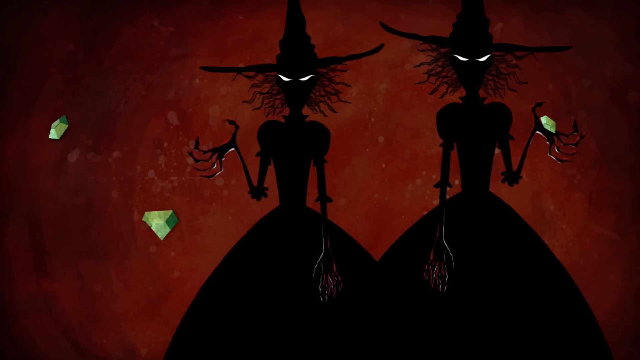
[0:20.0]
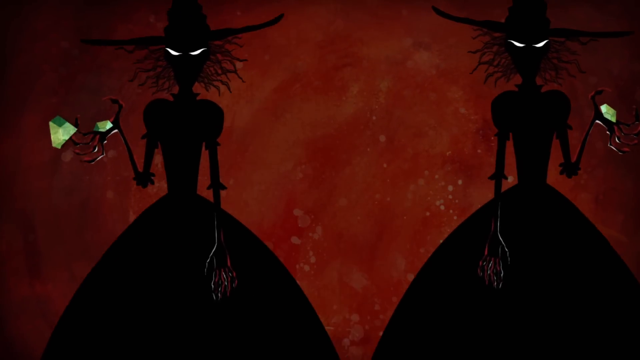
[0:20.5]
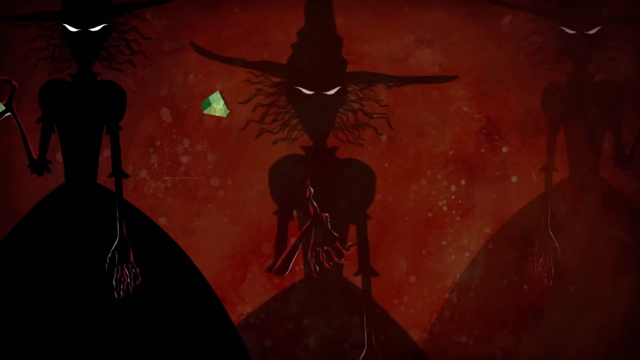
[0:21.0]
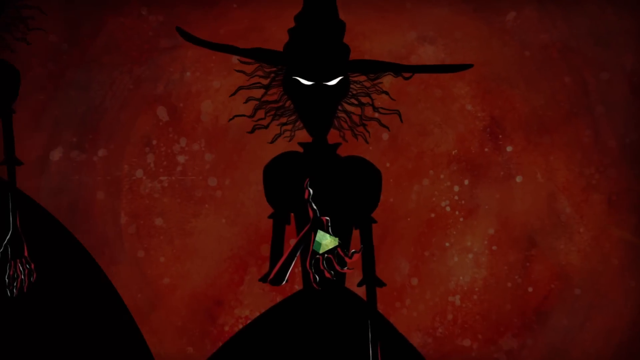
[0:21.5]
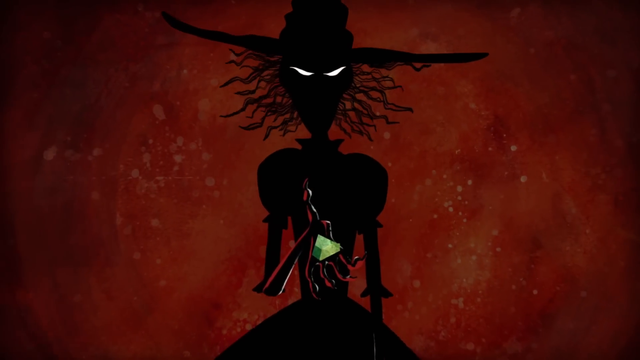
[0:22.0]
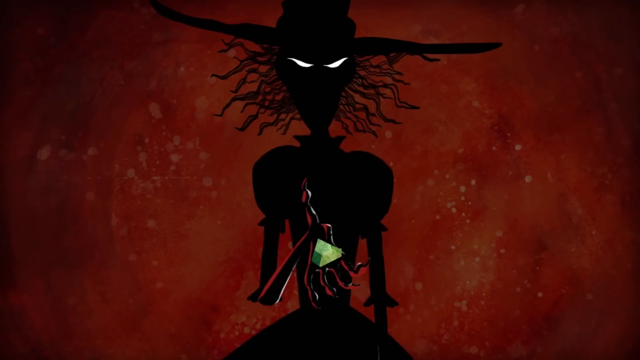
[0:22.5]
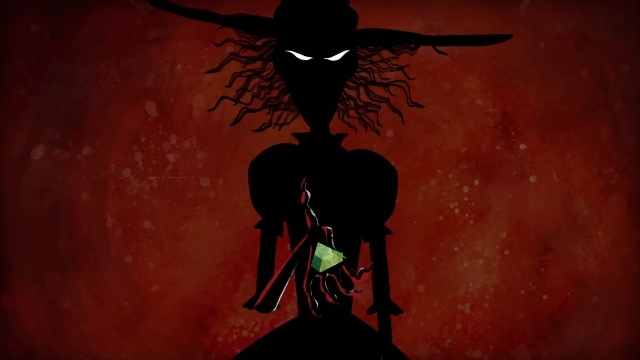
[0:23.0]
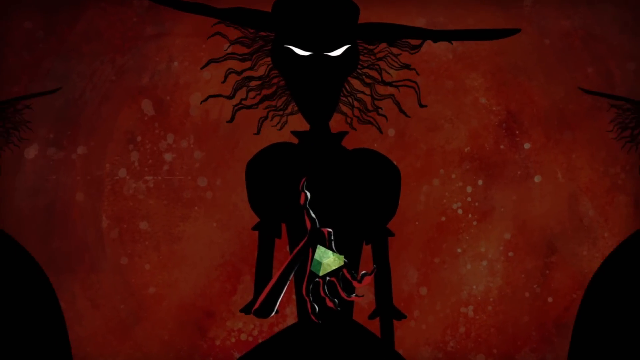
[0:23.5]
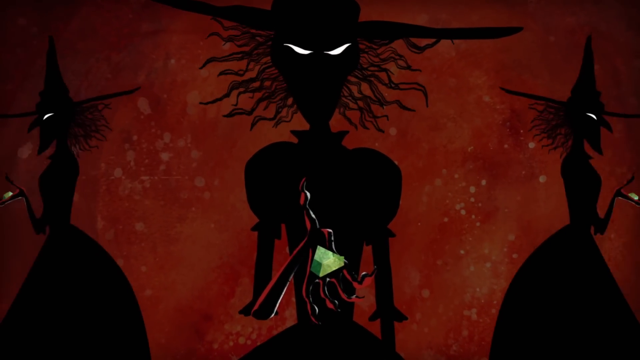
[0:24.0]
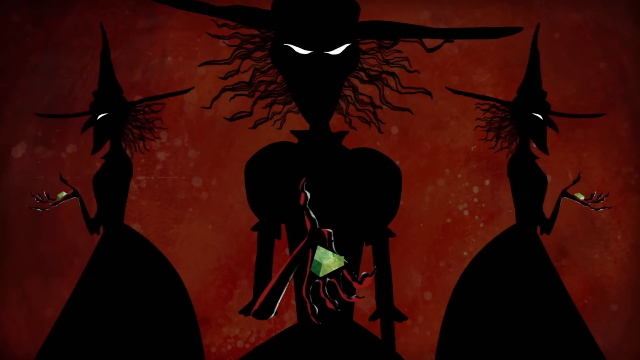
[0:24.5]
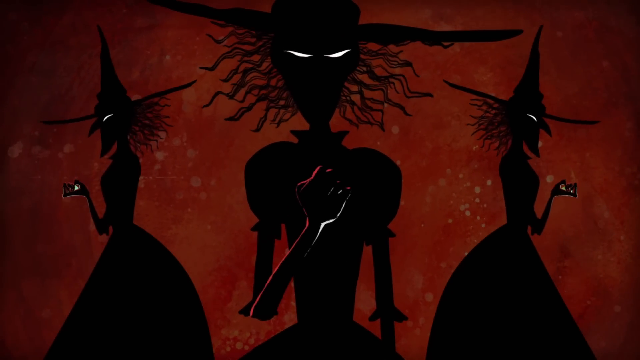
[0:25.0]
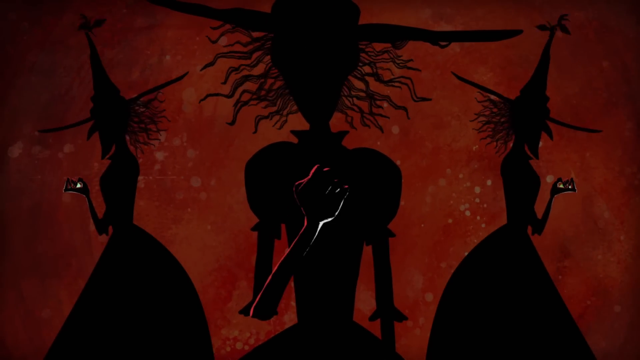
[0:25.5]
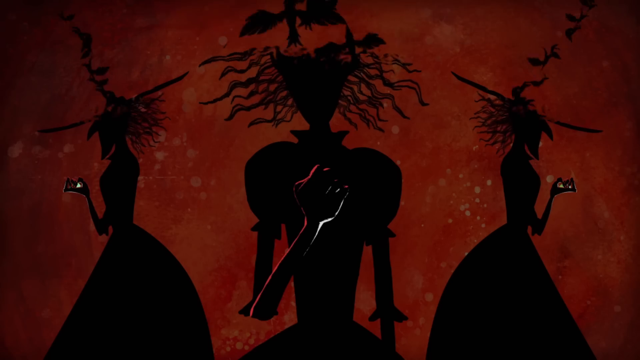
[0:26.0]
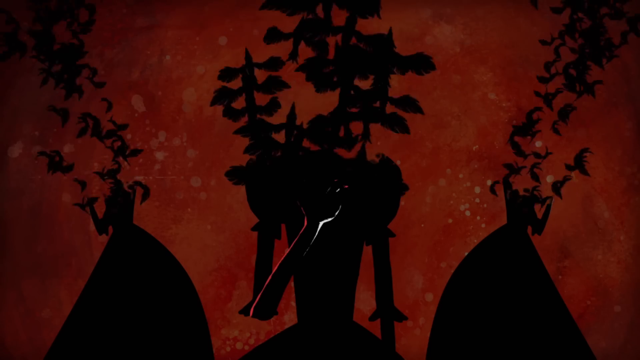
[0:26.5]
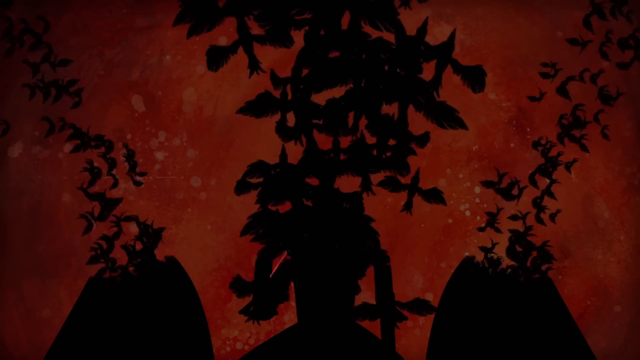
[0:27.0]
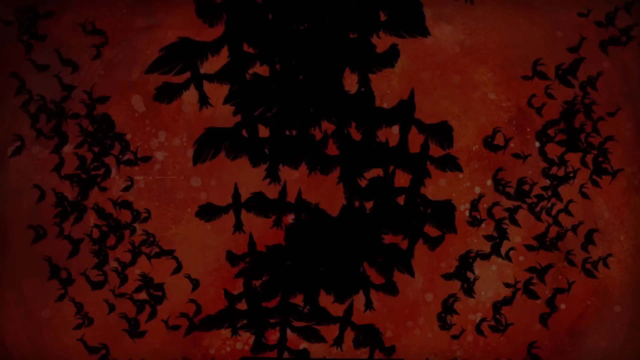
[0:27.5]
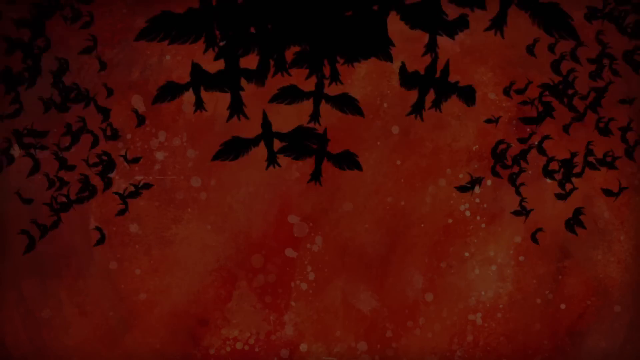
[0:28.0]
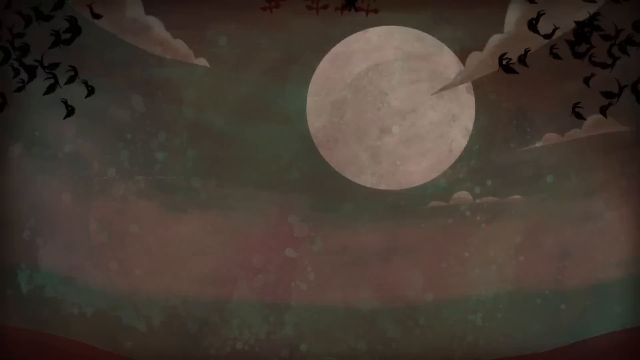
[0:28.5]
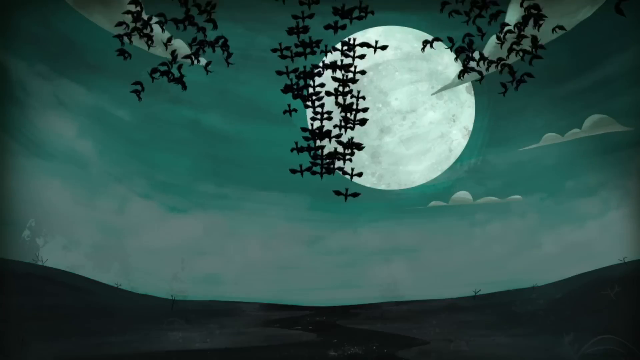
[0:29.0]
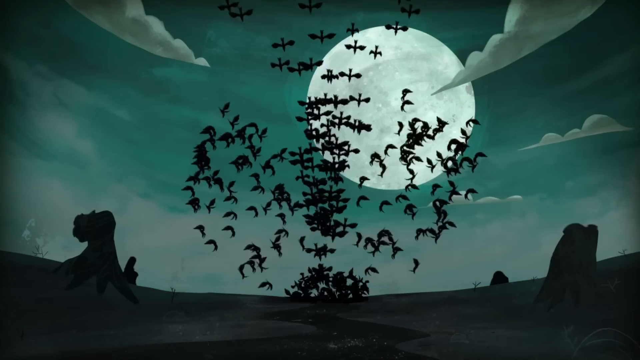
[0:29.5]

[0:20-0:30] A witch with roots growing in her hair has captured the diamond. She then fades away.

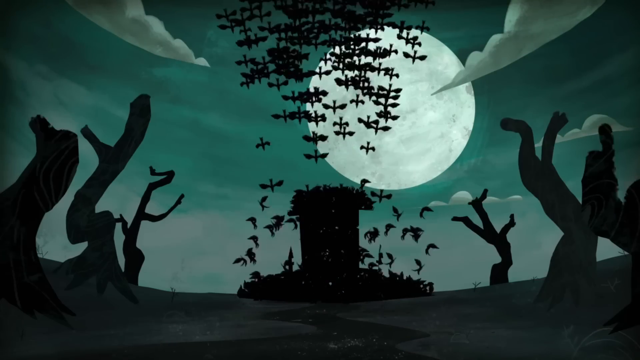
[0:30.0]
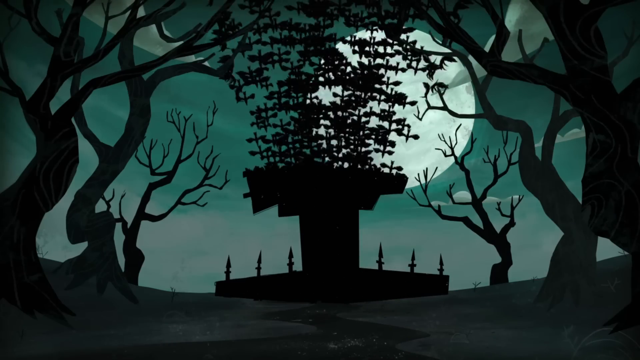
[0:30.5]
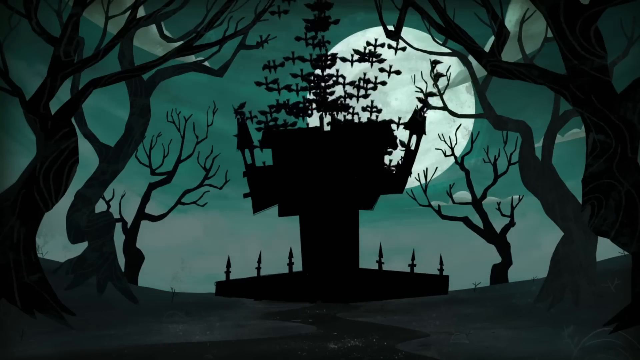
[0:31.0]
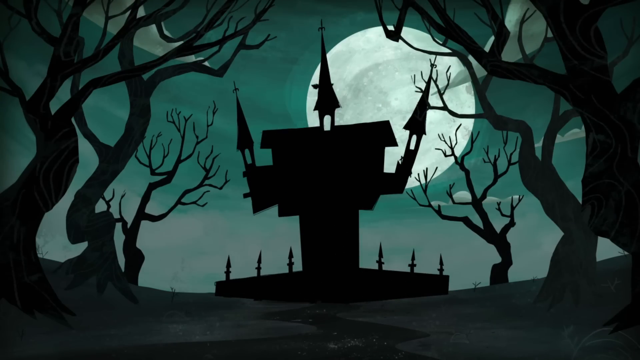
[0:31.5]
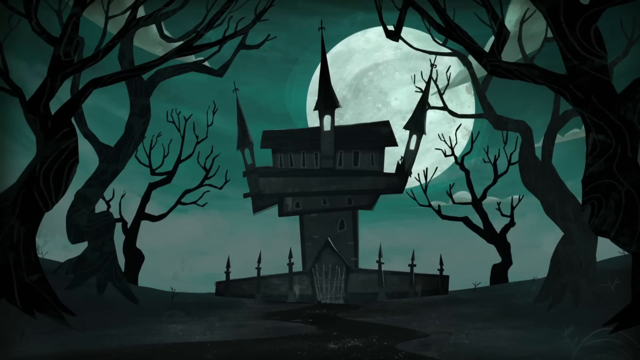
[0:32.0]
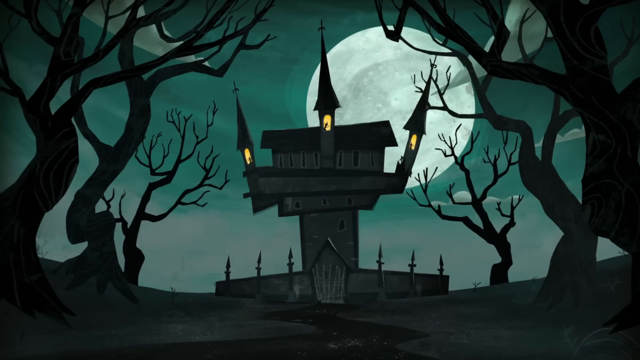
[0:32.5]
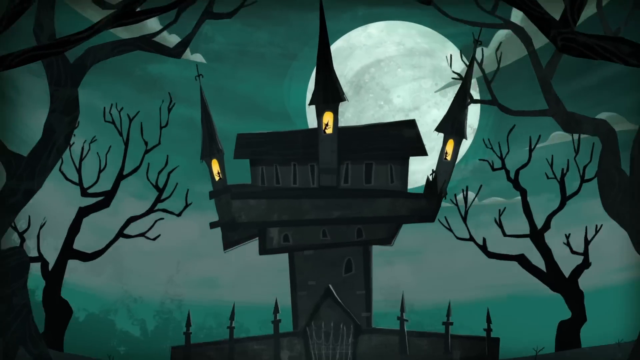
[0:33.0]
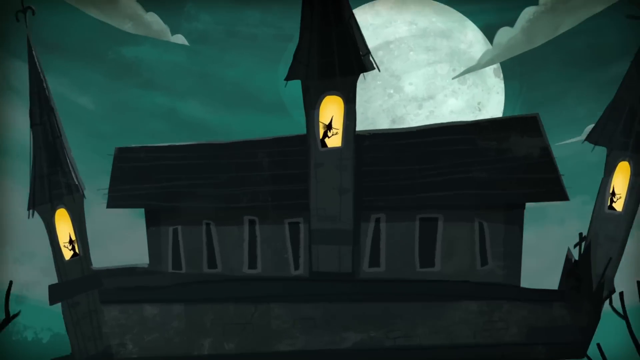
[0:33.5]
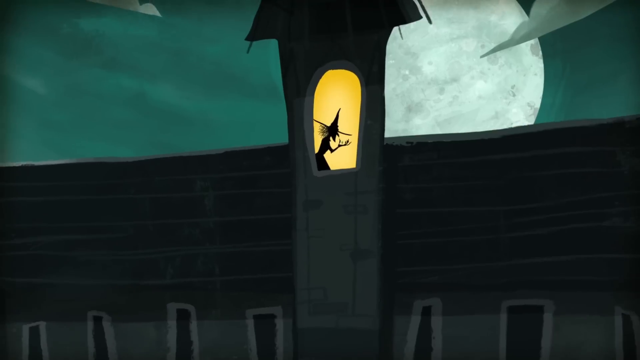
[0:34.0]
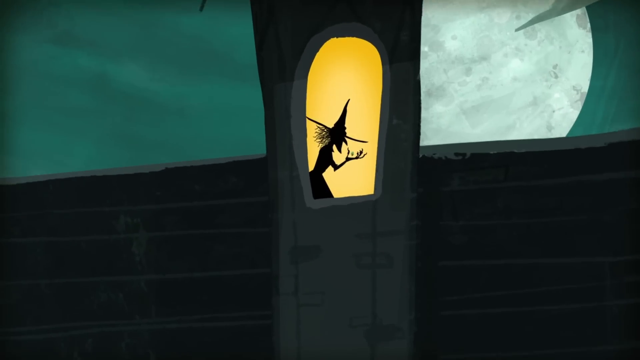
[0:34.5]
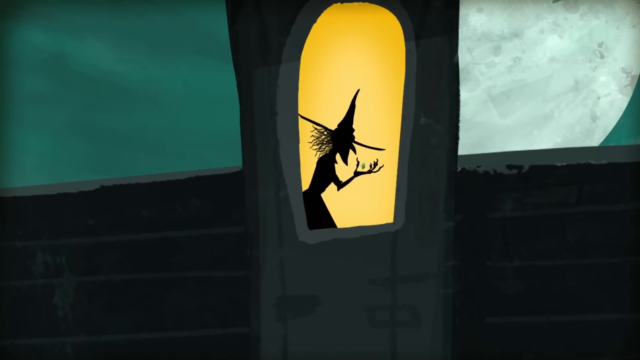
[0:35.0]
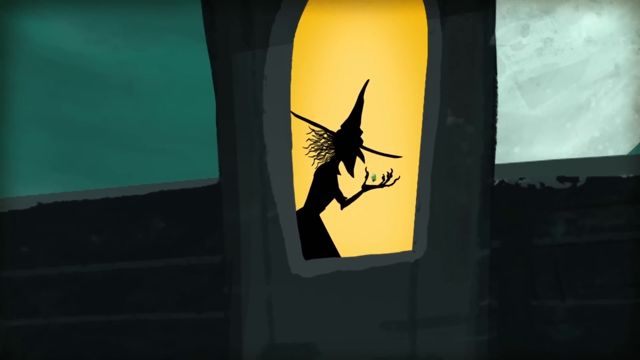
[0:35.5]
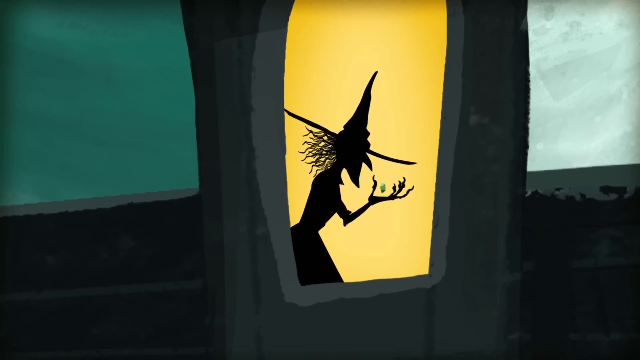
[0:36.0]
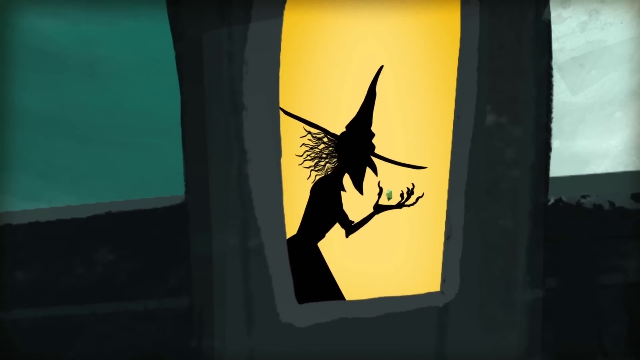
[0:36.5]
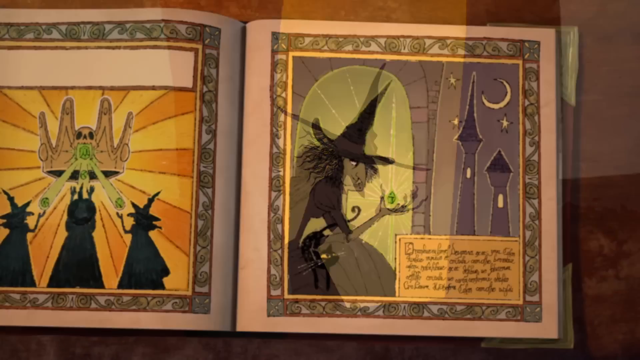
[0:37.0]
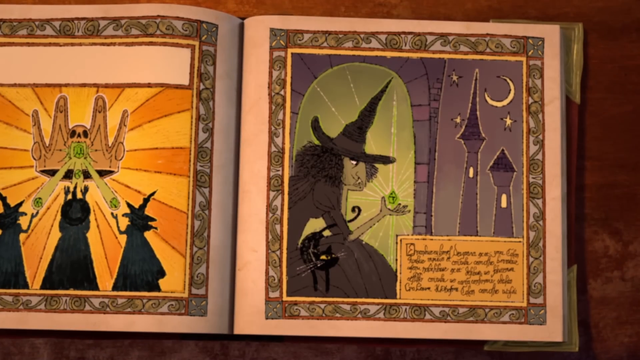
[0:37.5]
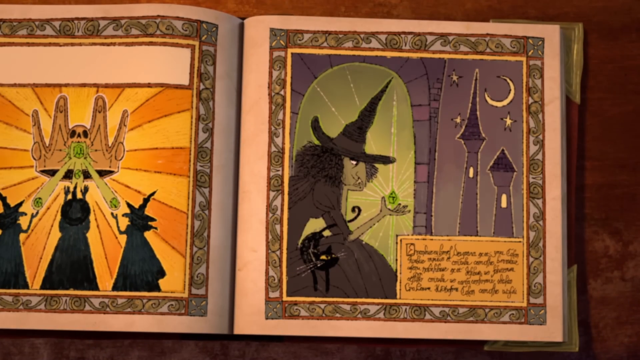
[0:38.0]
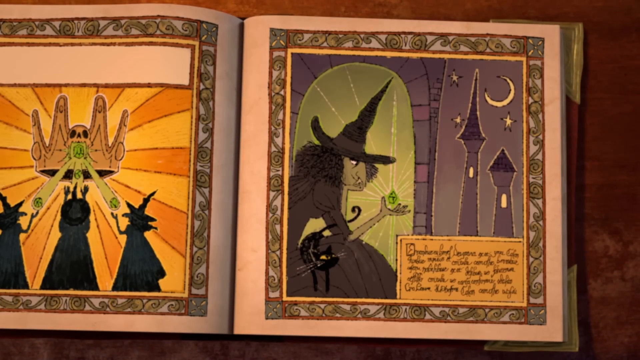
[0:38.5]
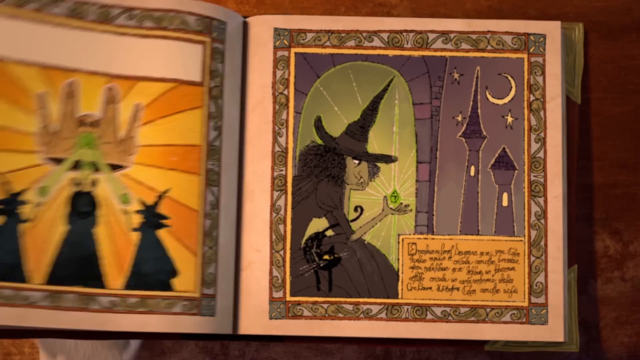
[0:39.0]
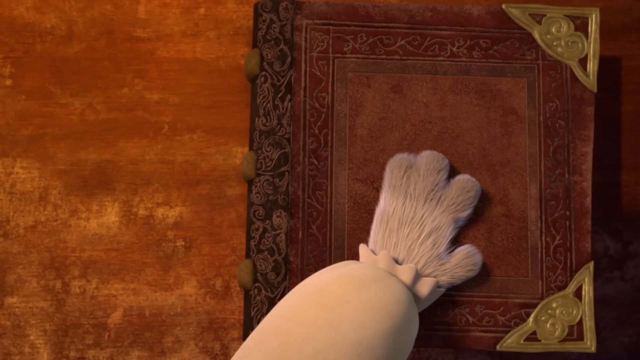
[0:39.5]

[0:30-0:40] The cat is now in a house. The book she was reading is about a castle and a witch. There is an audience, possibly her friends, who were listening to her read, and they look stunned and surprised. The book then ends.